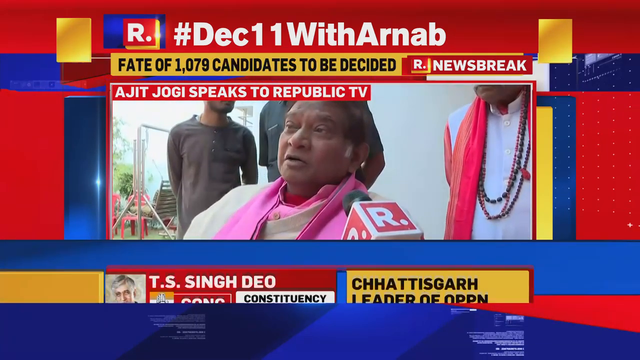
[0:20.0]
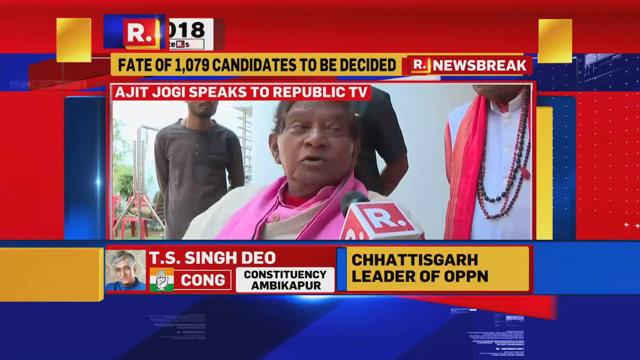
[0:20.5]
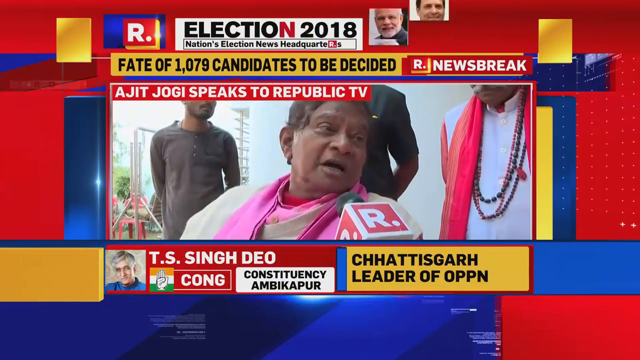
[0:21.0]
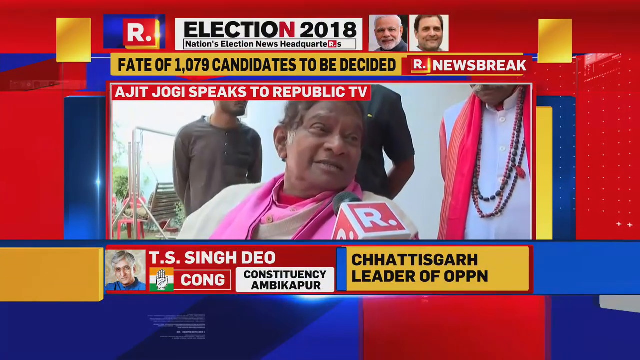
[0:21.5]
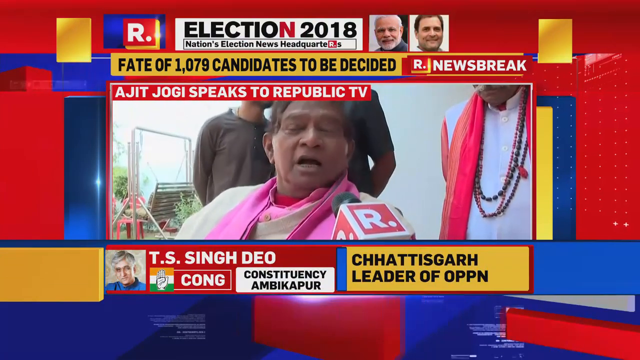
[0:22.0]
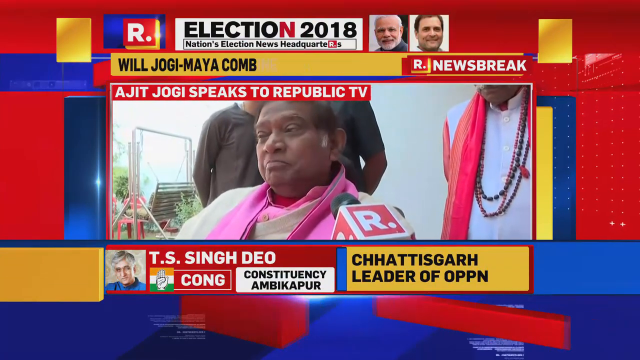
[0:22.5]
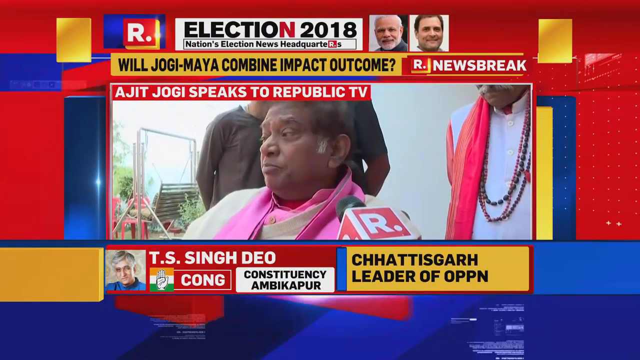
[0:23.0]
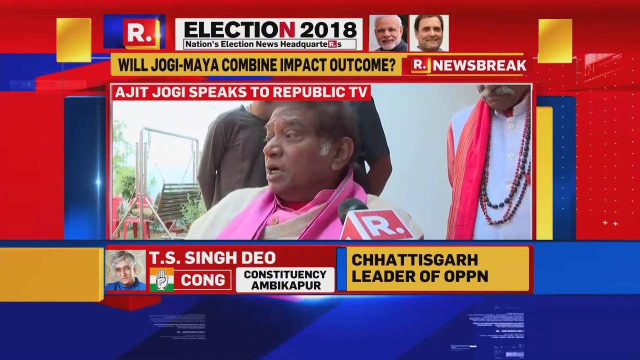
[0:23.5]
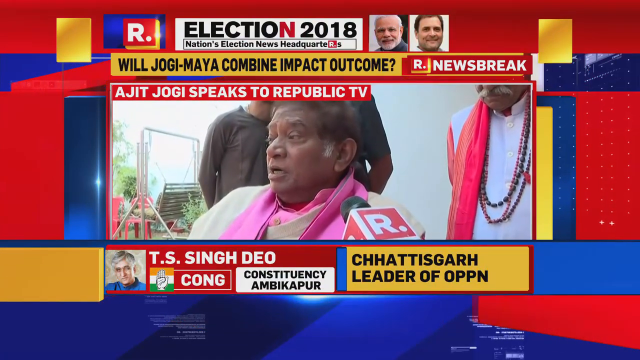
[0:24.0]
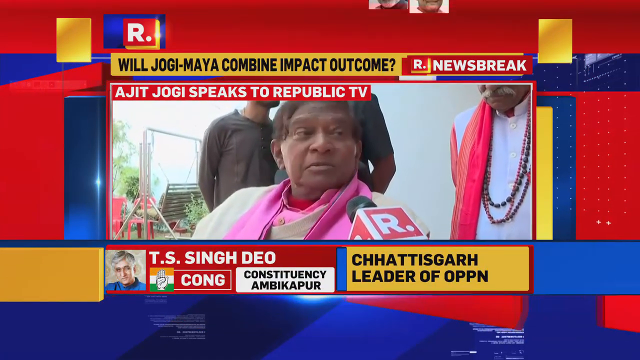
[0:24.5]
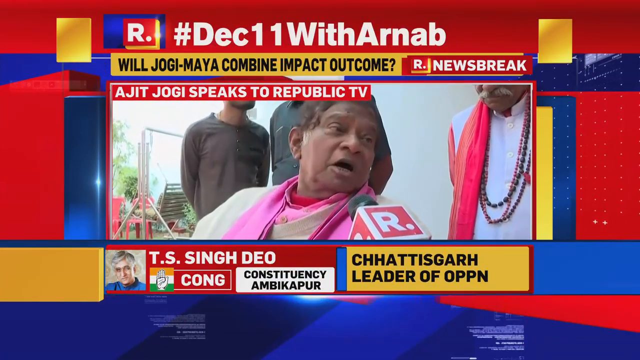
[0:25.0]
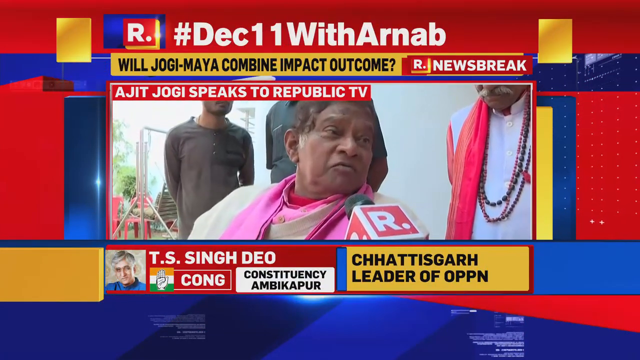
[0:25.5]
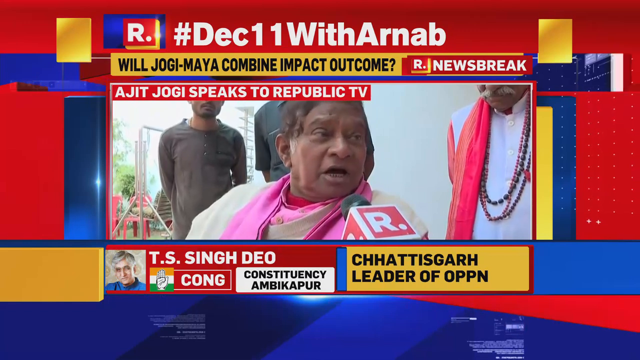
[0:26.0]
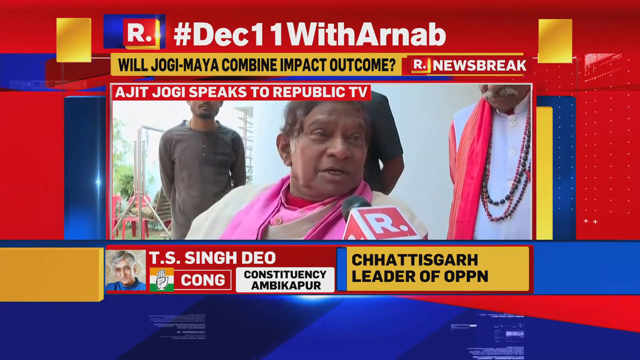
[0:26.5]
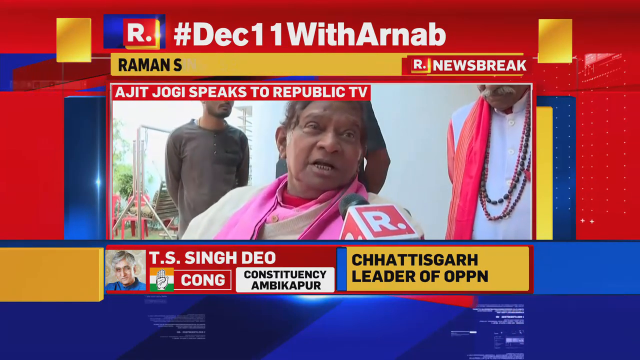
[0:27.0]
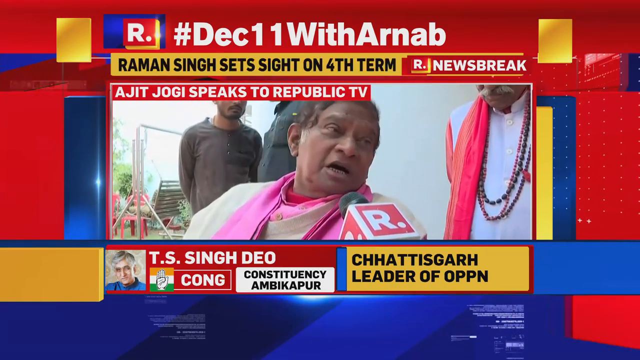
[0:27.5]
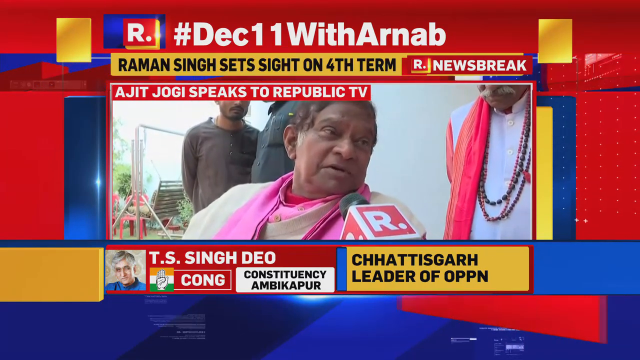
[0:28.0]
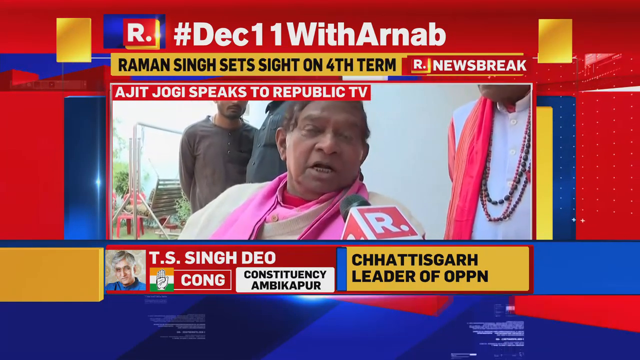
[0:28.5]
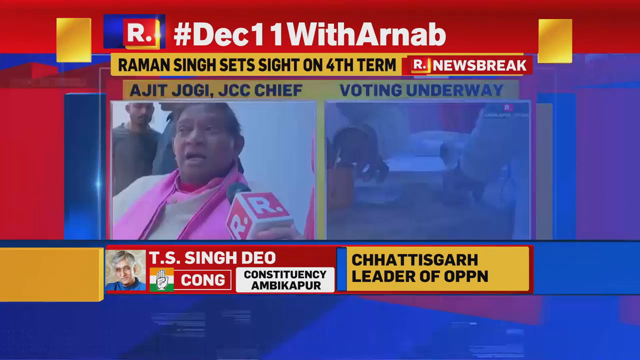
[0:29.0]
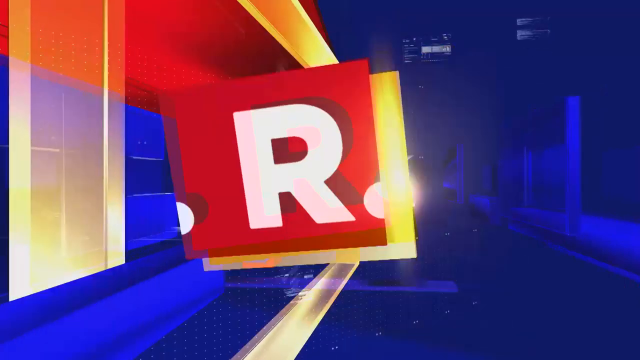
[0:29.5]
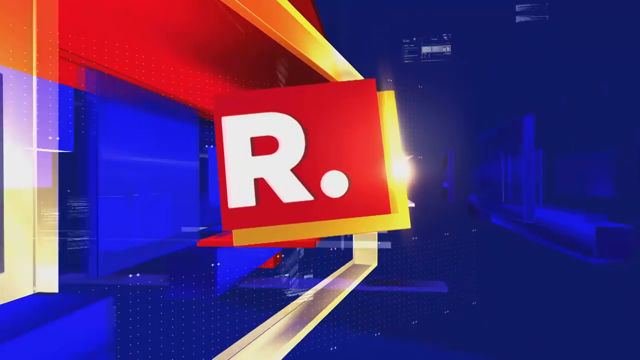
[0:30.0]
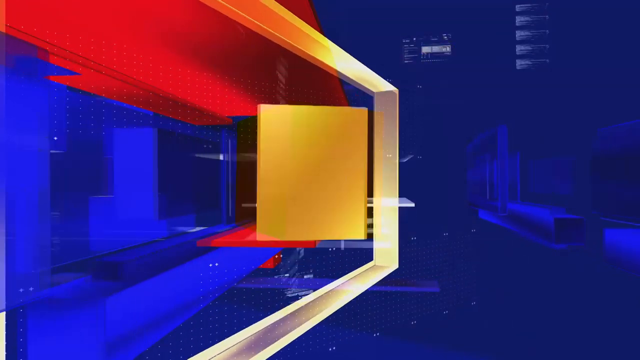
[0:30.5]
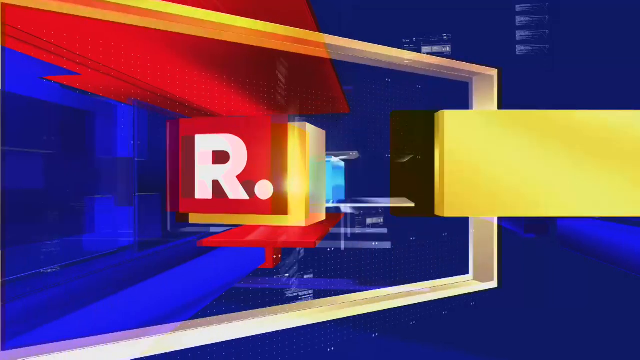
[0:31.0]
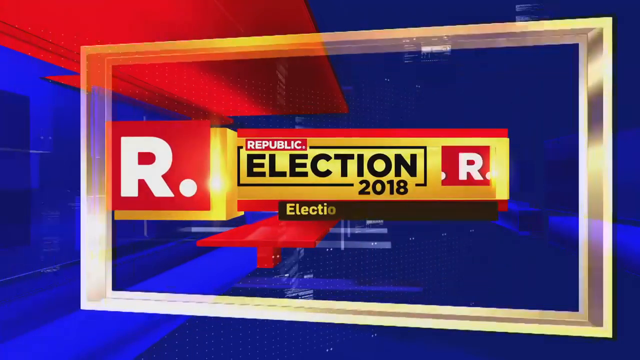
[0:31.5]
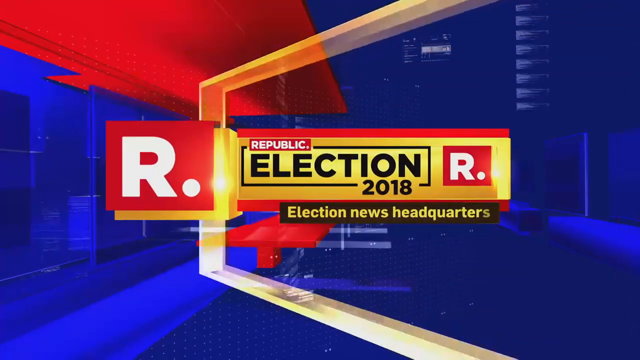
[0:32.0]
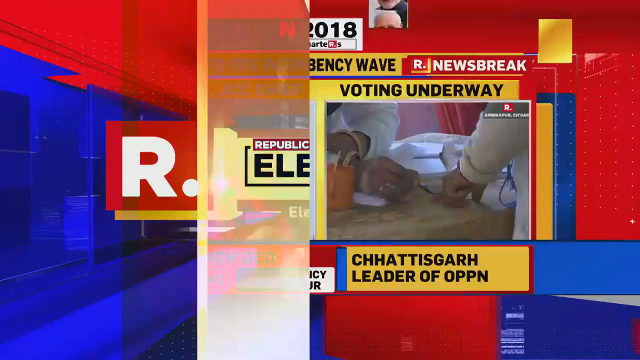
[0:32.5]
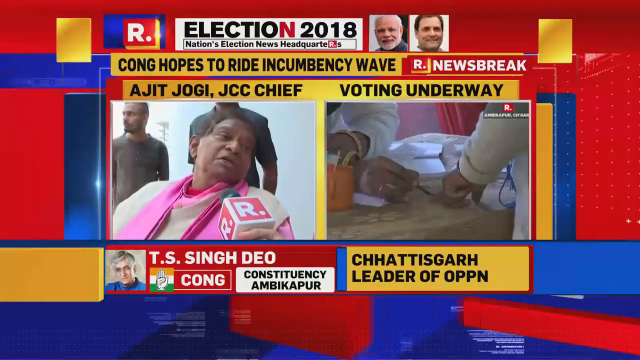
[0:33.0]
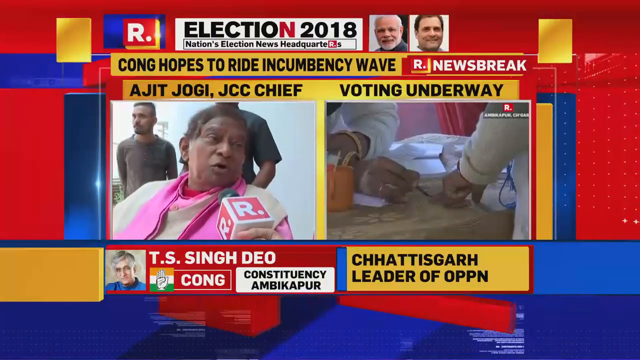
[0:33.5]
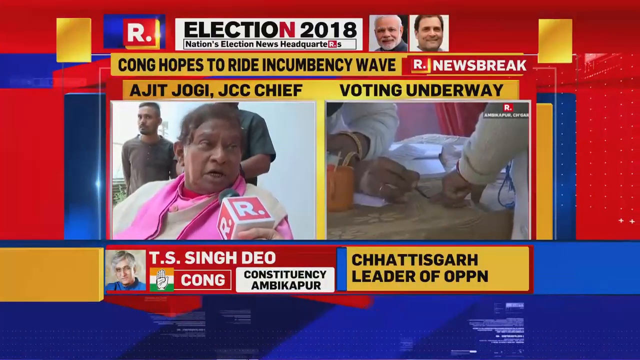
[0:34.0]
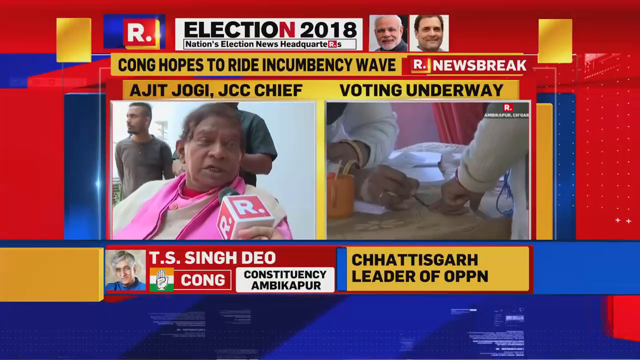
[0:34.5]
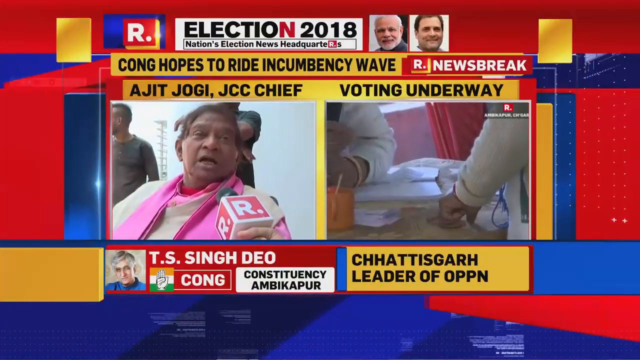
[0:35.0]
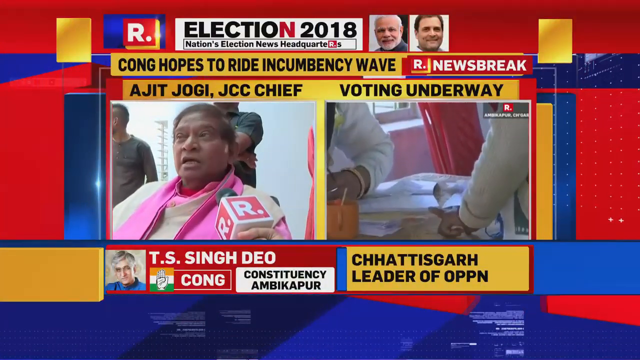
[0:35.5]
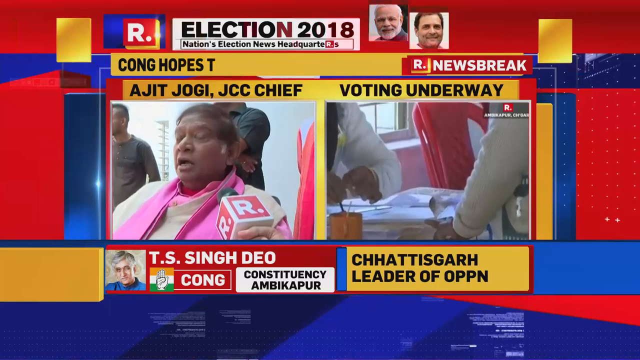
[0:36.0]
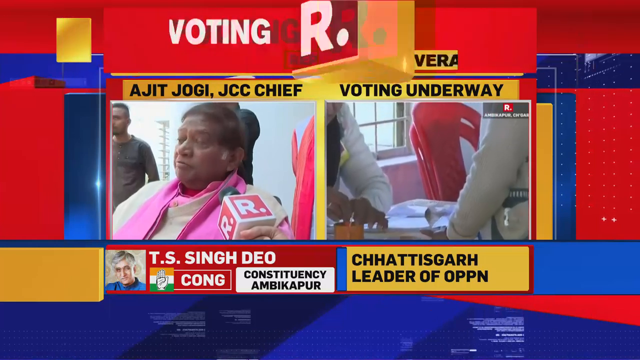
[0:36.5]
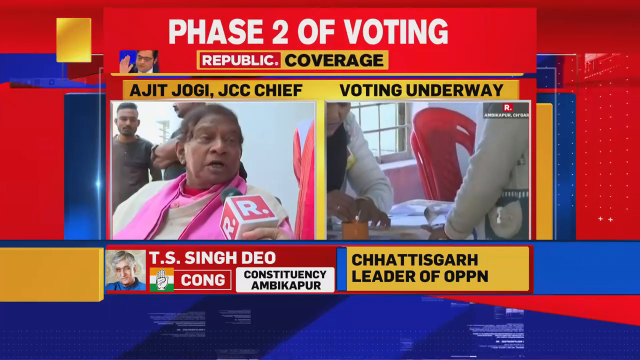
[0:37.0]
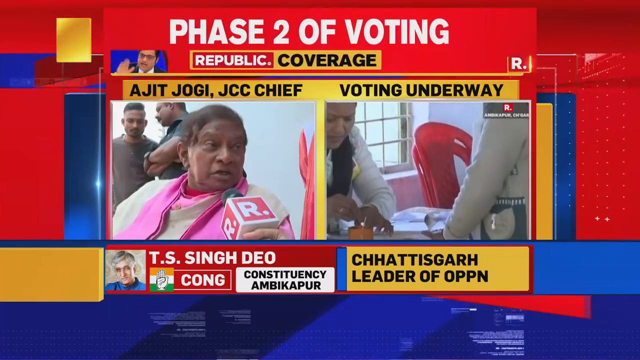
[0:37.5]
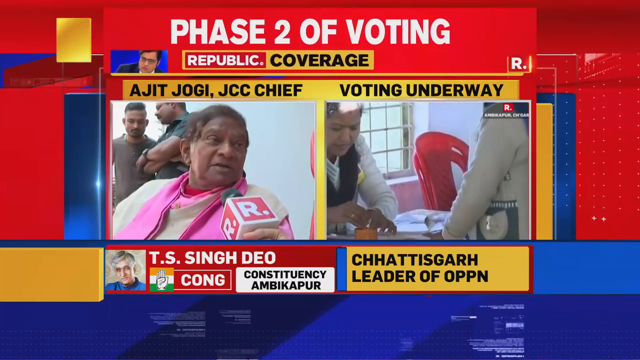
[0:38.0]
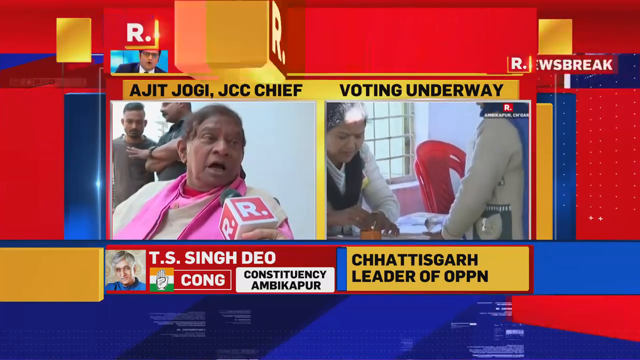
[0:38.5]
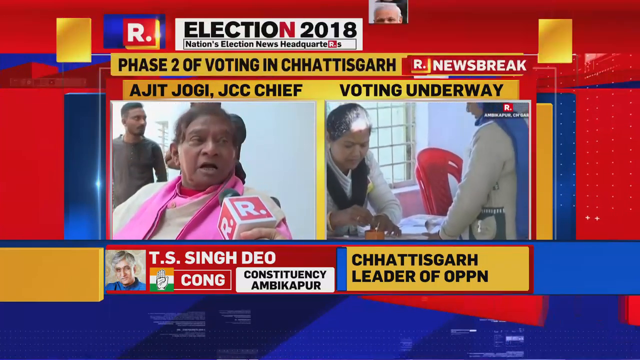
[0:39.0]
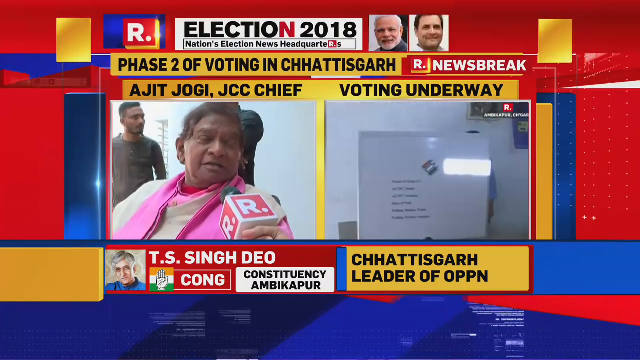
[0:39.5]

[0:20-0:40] The shot focuses on the woman being interviewed, who is identified at the bottom by black text in a golden yellow text box at the lower right beneath her: "Chhattisgarh leader of OPPN". The yellow text box at the top now says "will Jogi Maya combine impact outcome". In the lower left is a small graphic of a person with gray hair, with "T.S. Singh D.E.O." in white, "Cong" in white beneath it, and, in black text in a white text box in the corner of that red text box, "constituency Ambikapur". She talks into the microphone. The view switches to a news graphic in which the R with a period in a red box kind of moves around while a gold frame kind of rotates around it. To the right of the R it says "election 2018", with "election news headquarter" in a black text box underneath; the election 2018 logo is gold, with a larger R logo to its left, and the frame keeps rotating. The video returns to the very colorful red, blue and yellow graphic, with the woman talking on the left and voting going on on the right. Above the right side, black text says "voting underway", and on the left the yellow text box says "Ajit Jogi JCC chief". It looks like a voting process in India is being shown.